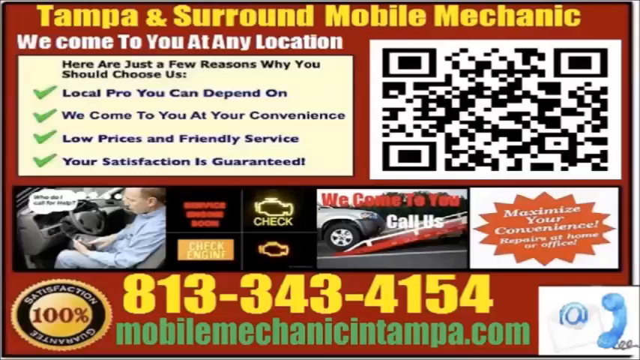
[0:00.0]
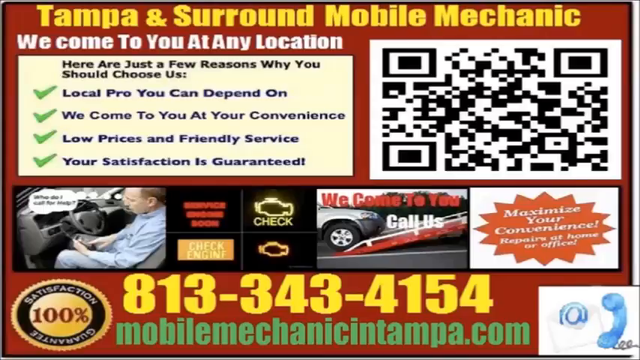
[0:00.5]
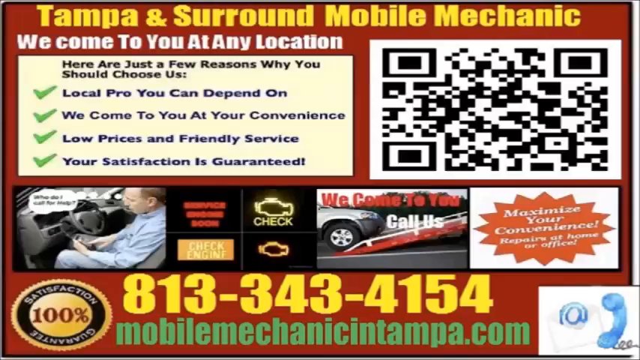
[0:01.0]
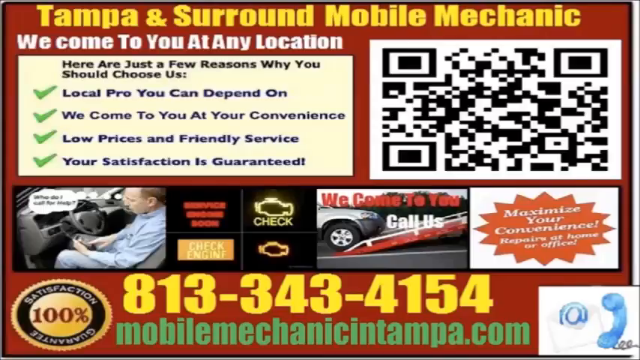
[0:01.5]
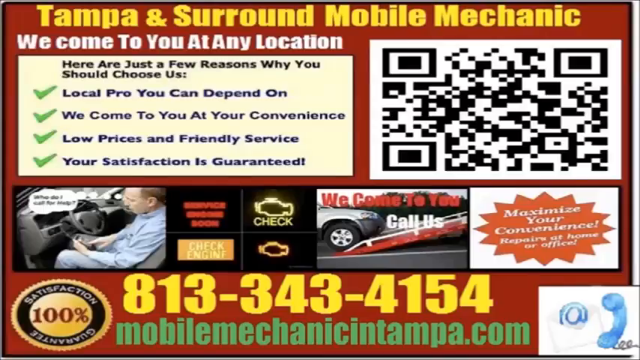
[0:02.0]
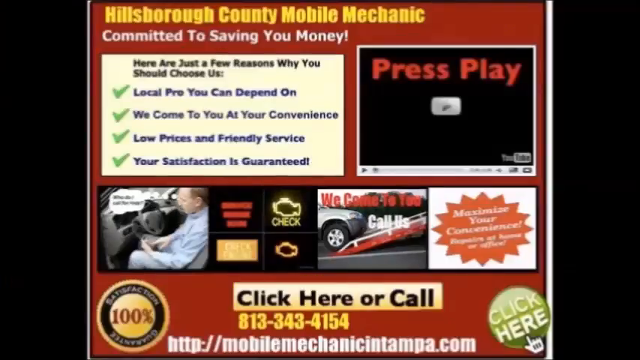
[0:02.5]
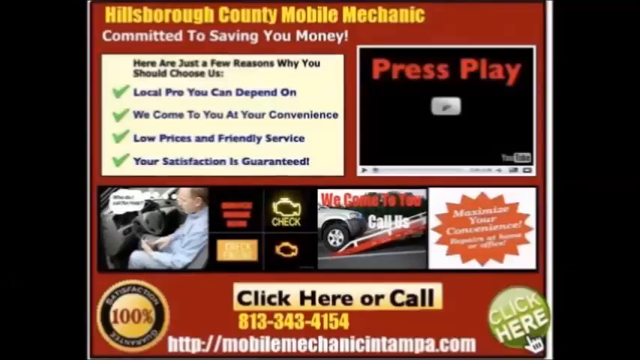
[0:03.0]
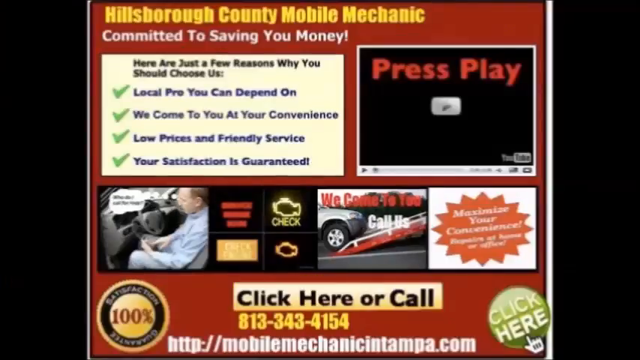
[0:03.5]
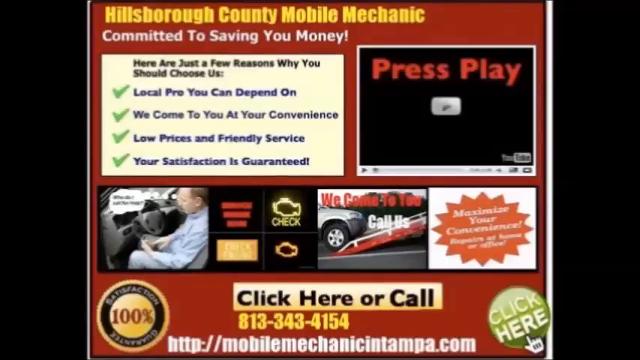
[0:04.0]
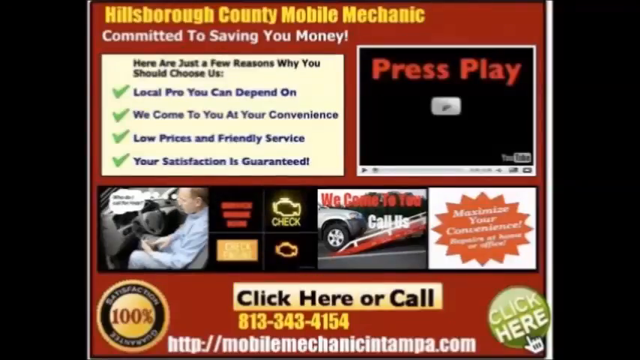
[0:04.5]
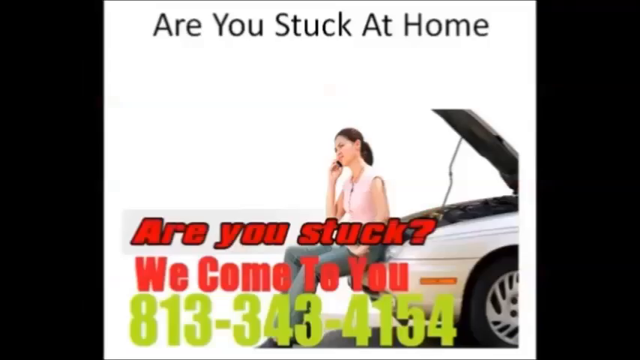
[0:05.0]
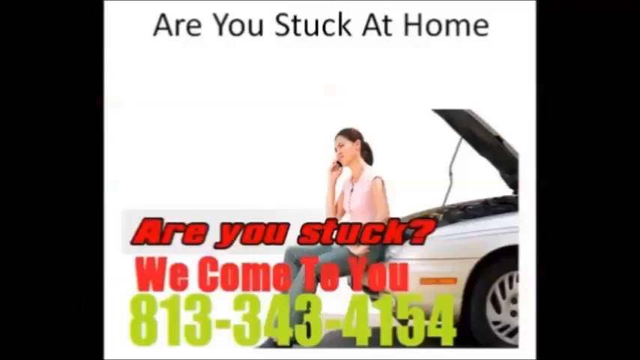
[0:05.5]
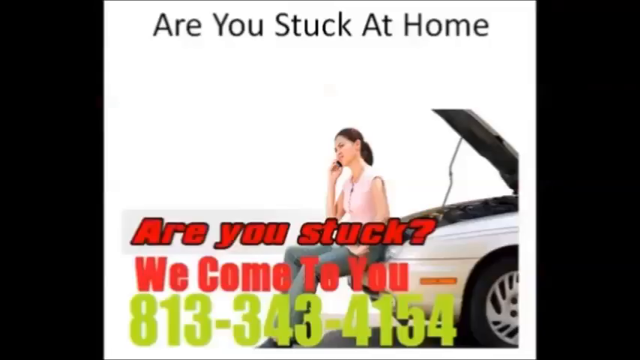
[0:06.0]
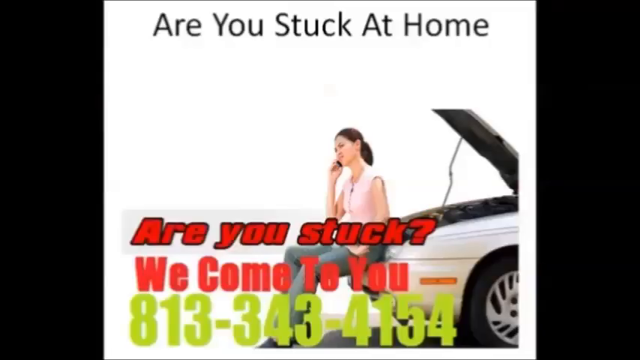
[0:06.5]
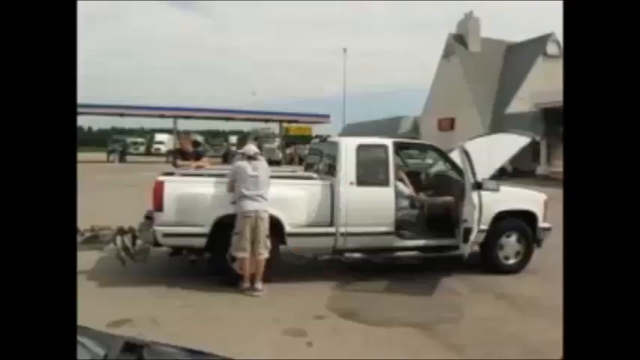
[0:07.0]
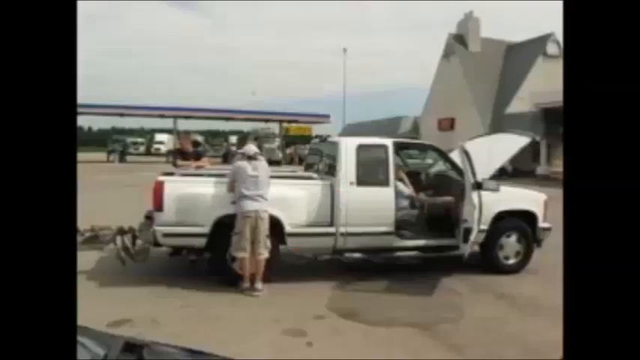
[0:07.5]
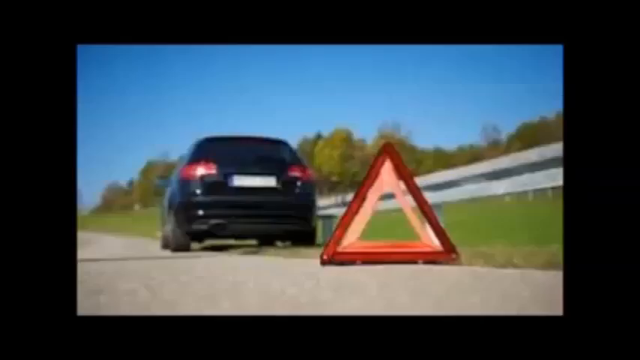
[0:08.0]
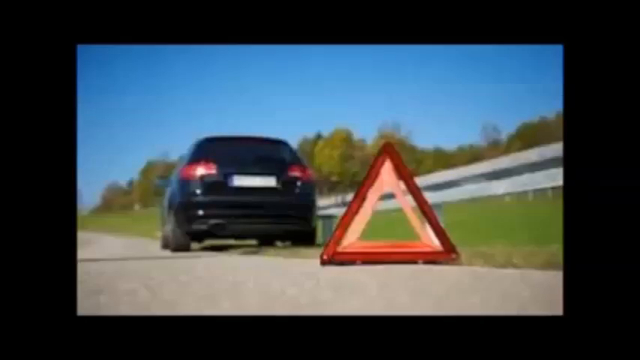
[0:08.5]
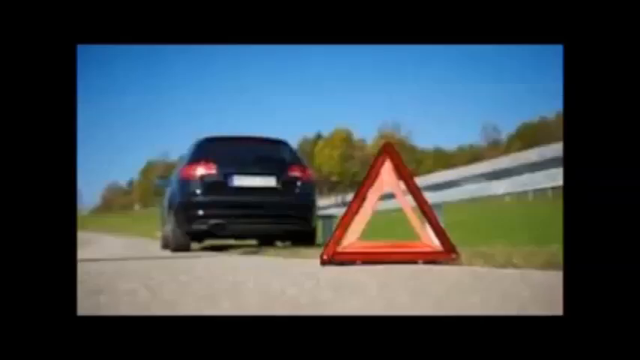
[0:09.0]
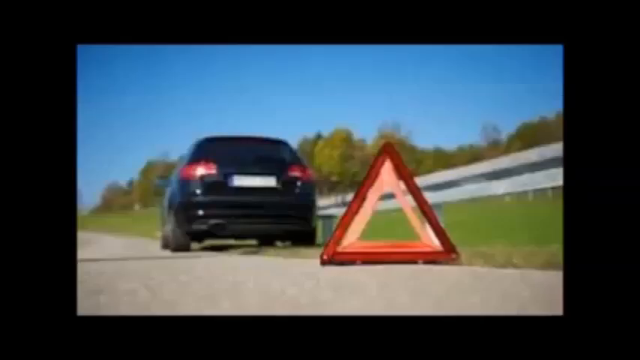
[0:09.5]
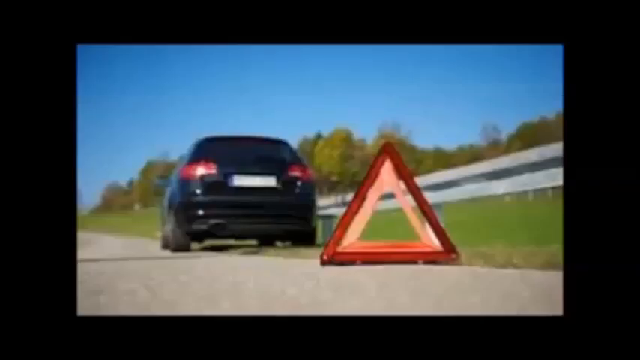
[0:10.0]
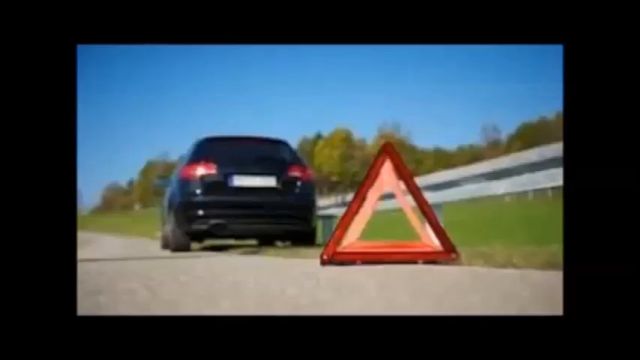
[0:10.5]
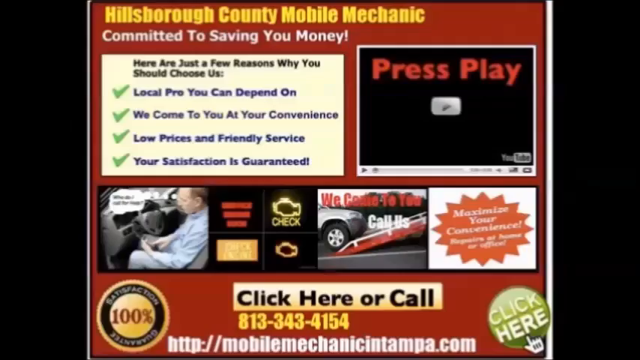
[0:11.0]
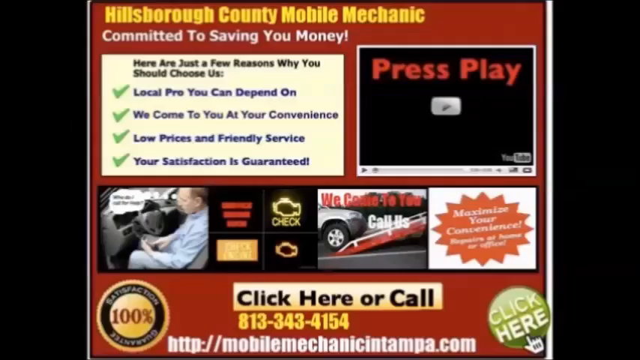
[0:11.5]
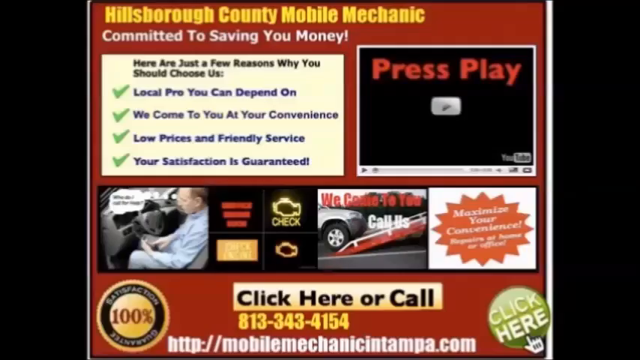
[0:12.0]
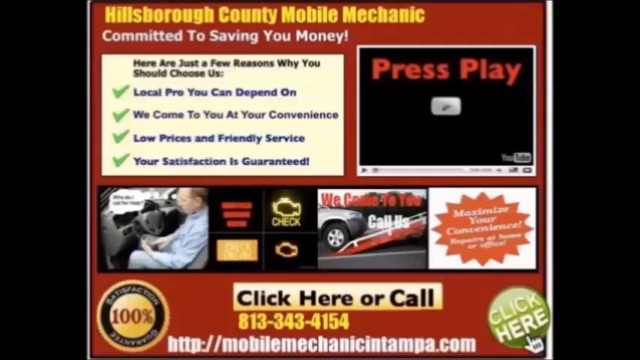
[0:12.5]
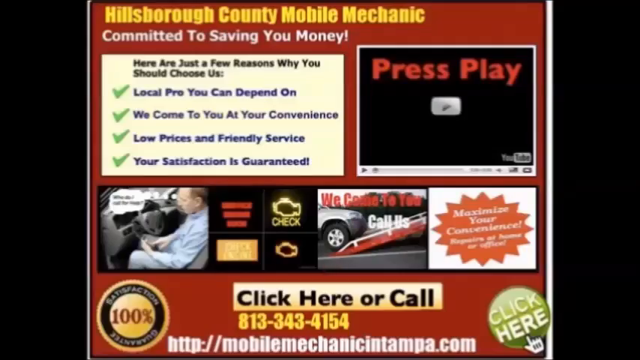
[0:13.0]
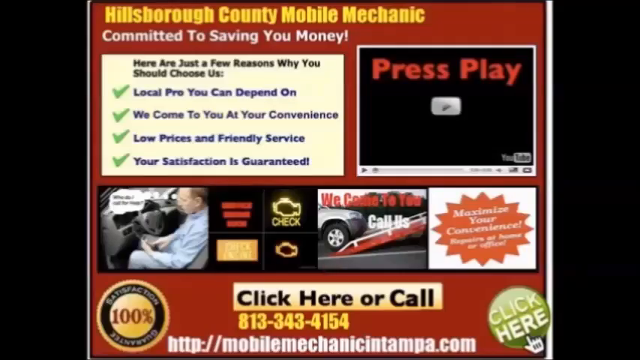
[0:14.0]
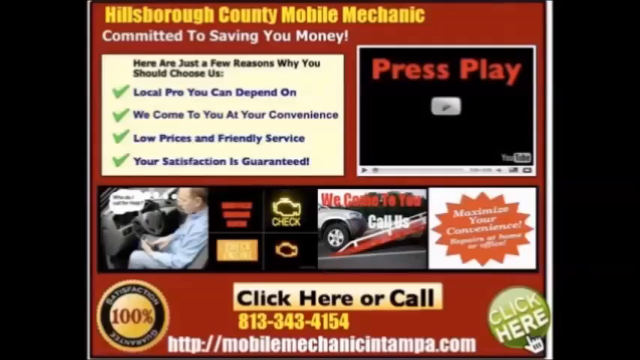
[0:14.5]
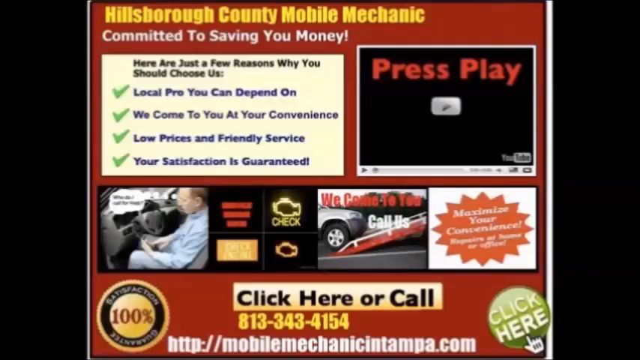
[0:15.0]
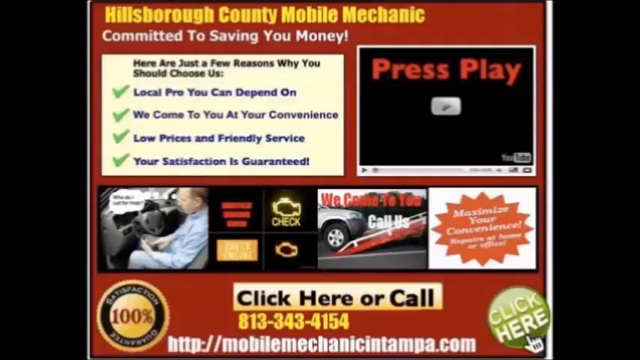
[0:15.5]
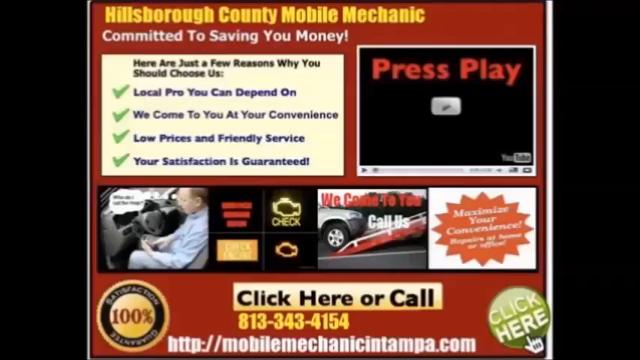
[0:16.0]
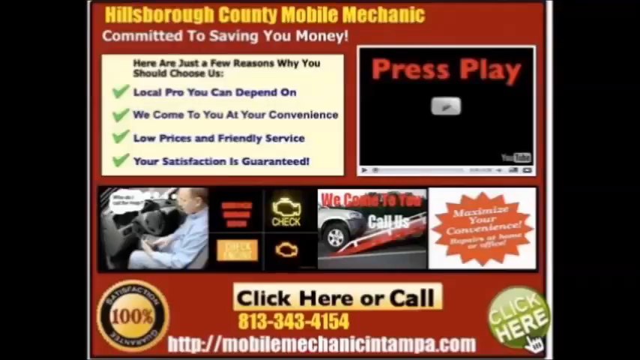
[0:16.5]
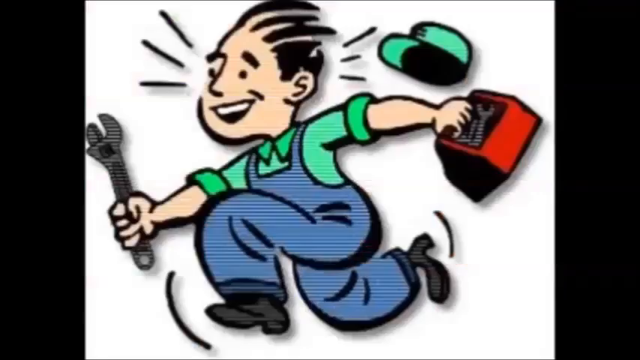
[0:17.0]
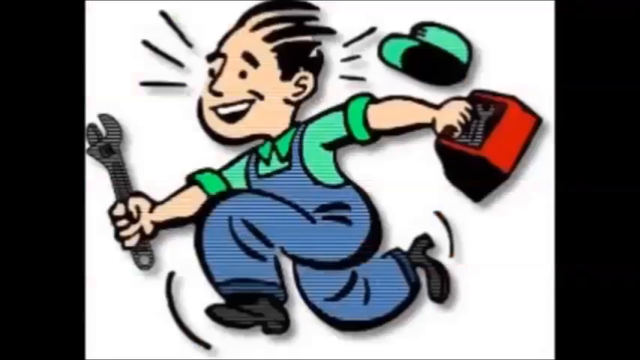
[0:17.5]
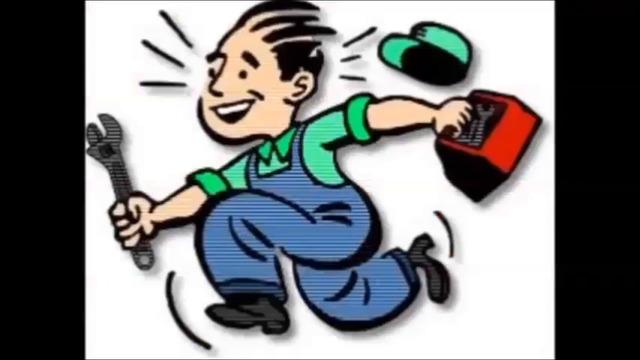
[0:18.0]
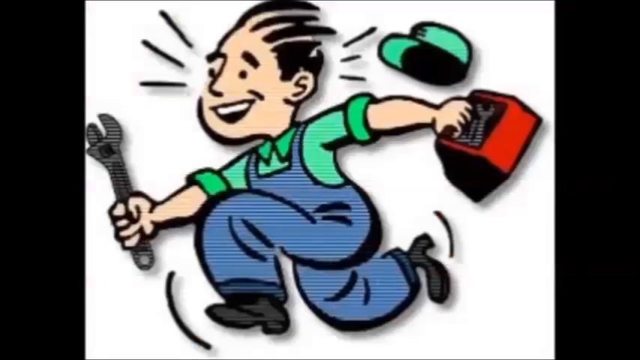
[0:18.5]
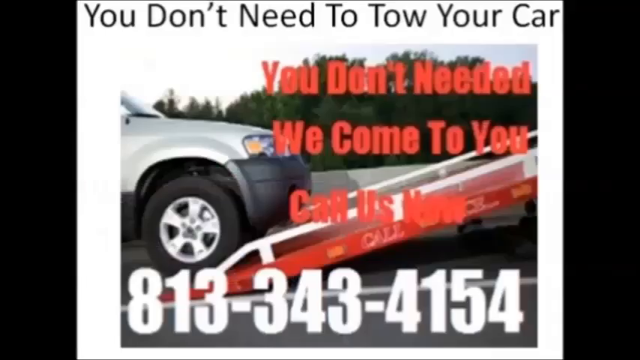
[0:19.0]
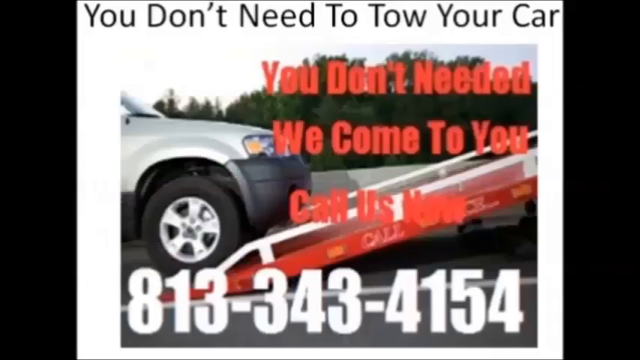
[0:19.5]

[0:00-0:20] The video is for Tampa and Surround Mobile Mechanic, and it reads "we come to you at any location." Next comes the text "here are just a few reasons why you should choose us." A green check mark is beside "local pro you can depend on," a check mark is beside "we come to you at your convenience," the next check mark is beside "low prices and friendly service," and another green check mark is beside "your satisfaction is guaranteed." A QR code is in the upper right-hand corner, and a phone number at the bottom reads 813-343-4154. The video cuts to another page that reads "Hillsborough County mobile mechanic committed to saving you money." It has a press play on the right, the reasons again on the left, and at the bottom the text "click here or call." Different pictures follow: a man sitting in his car, a check oil light that has come on, the text "we come to you, call us," and an award at the bottom that reads "a hundred percent guarantee."